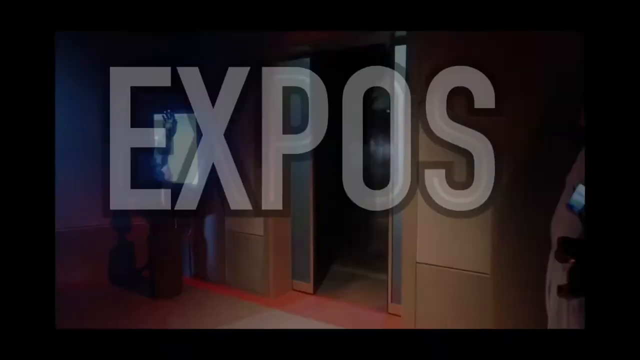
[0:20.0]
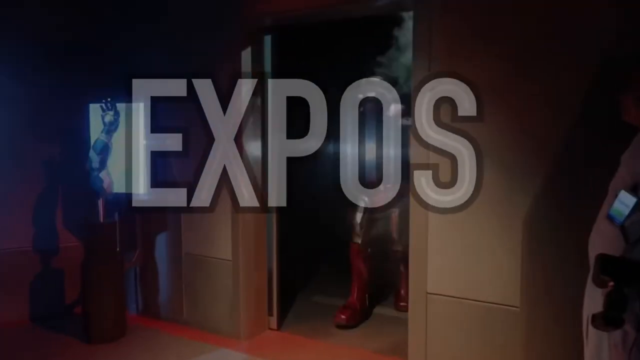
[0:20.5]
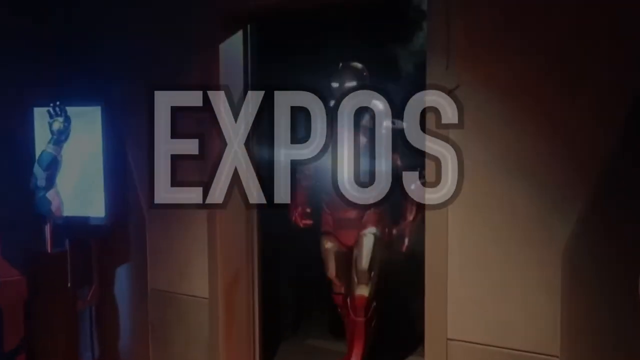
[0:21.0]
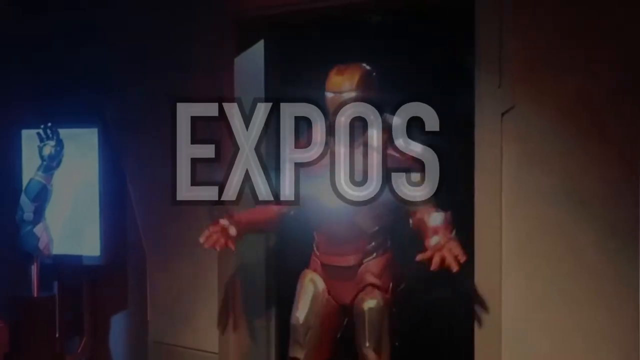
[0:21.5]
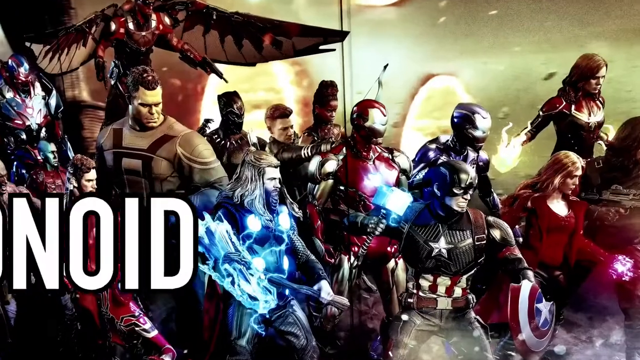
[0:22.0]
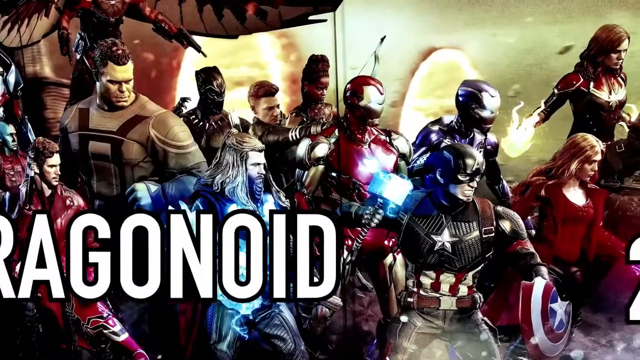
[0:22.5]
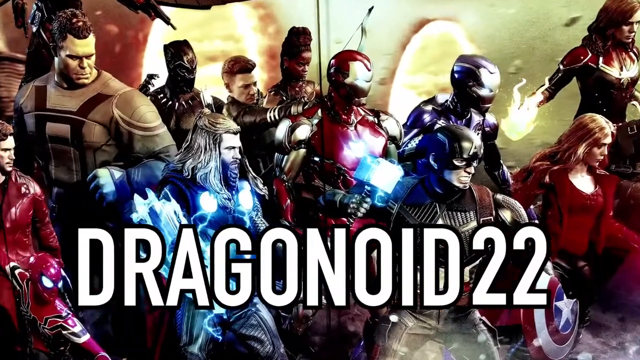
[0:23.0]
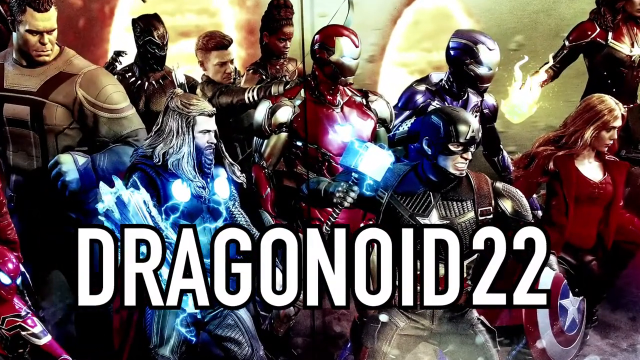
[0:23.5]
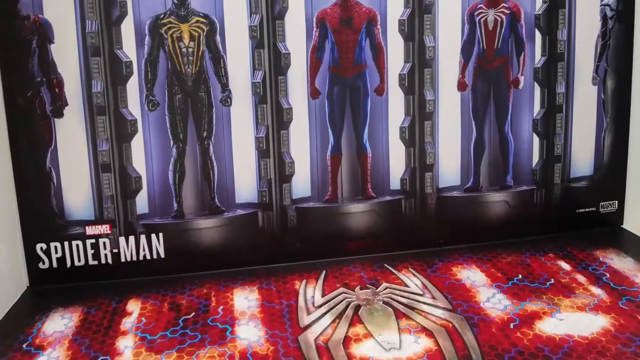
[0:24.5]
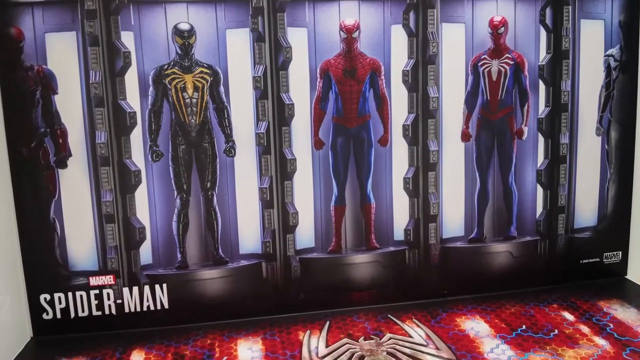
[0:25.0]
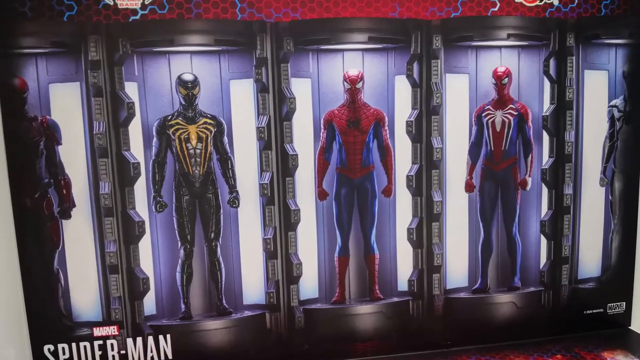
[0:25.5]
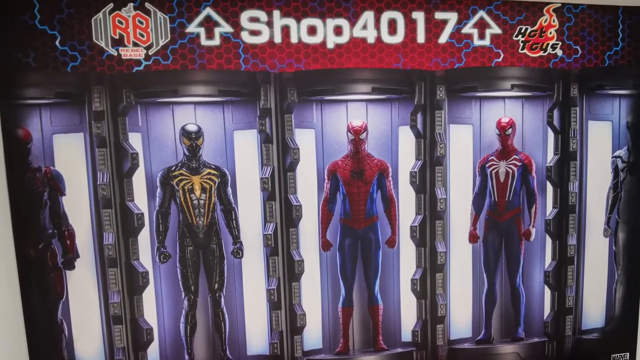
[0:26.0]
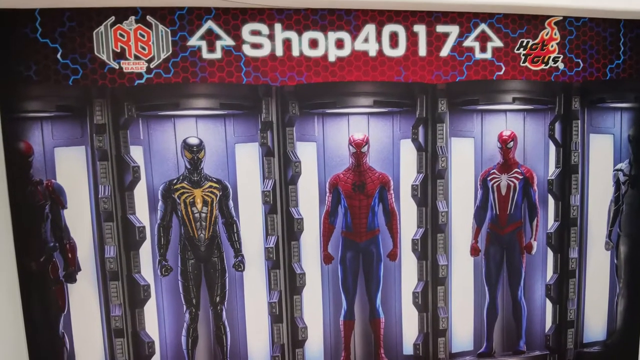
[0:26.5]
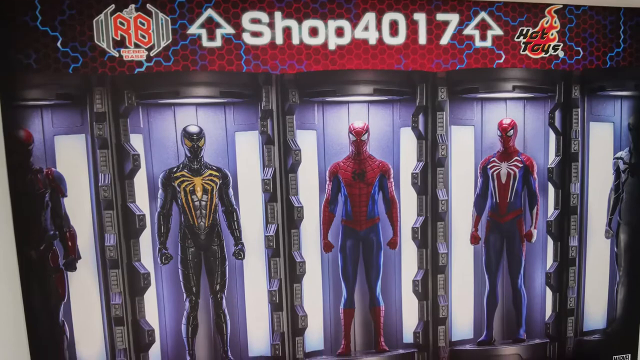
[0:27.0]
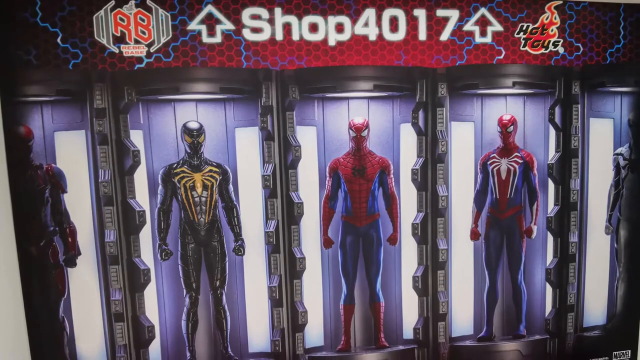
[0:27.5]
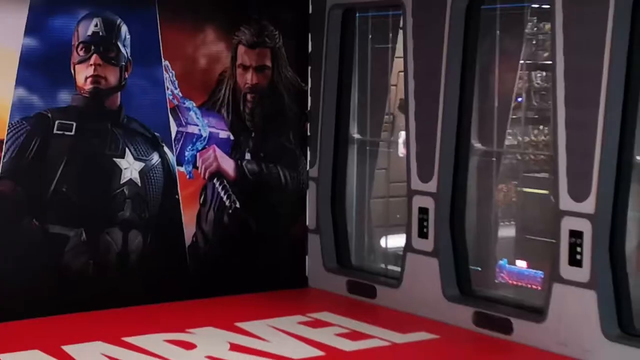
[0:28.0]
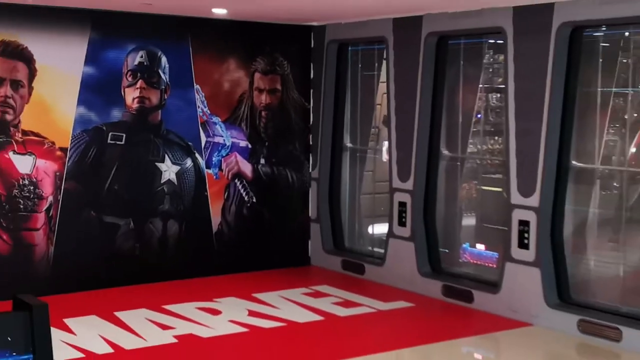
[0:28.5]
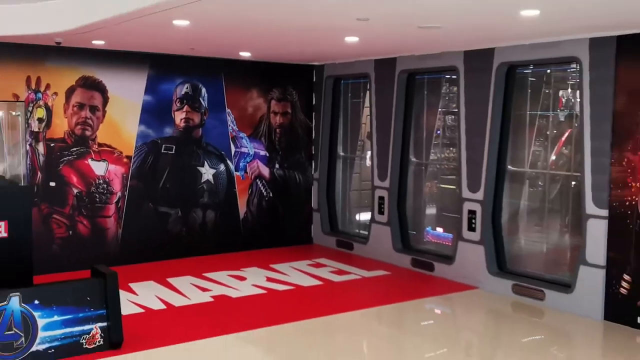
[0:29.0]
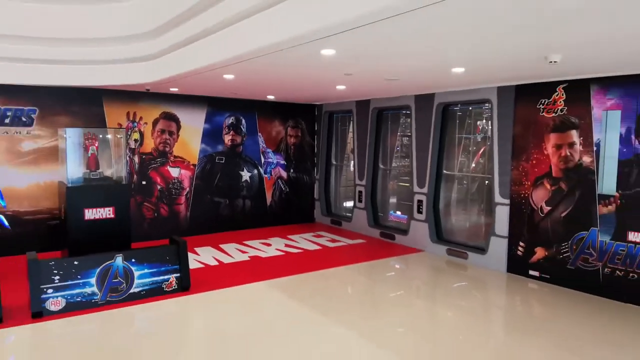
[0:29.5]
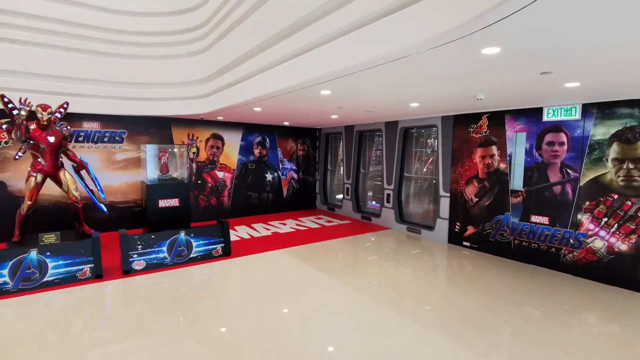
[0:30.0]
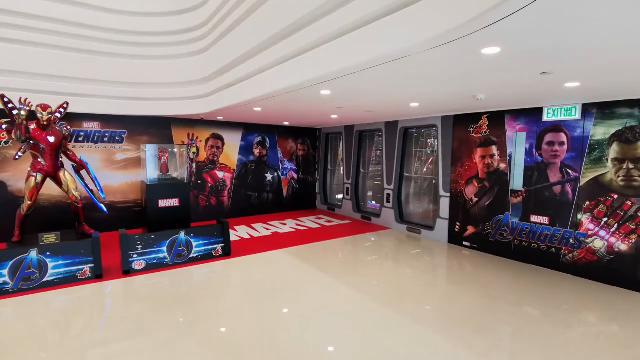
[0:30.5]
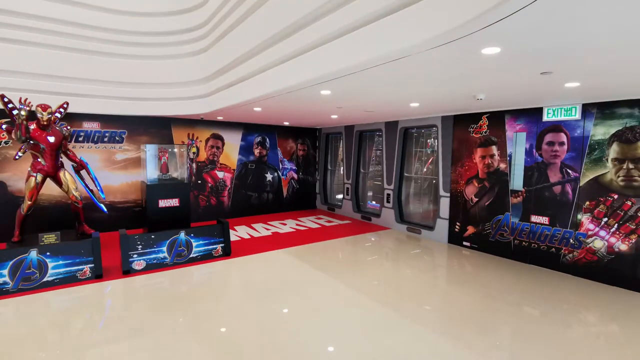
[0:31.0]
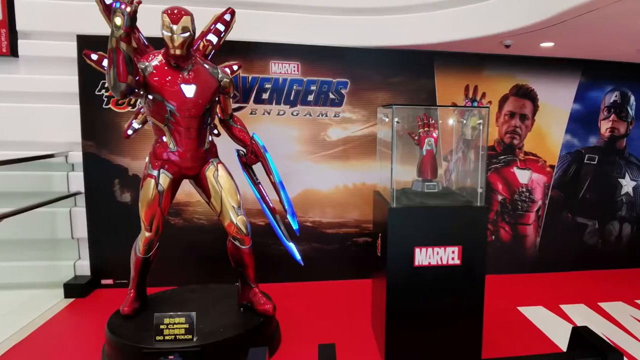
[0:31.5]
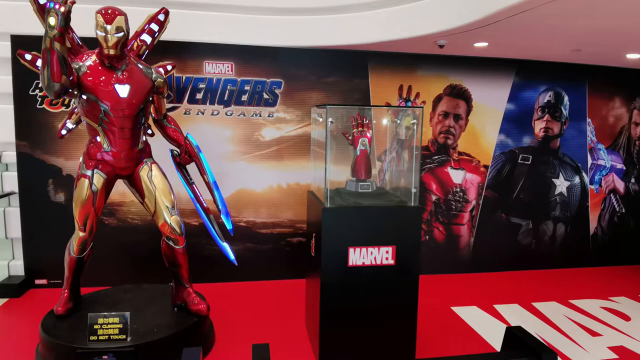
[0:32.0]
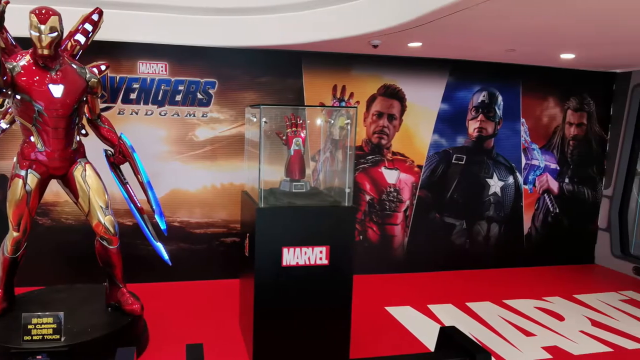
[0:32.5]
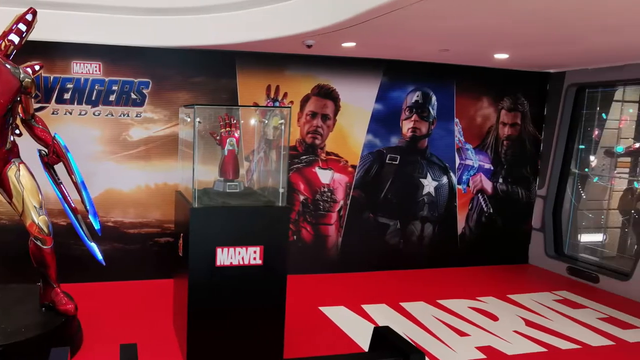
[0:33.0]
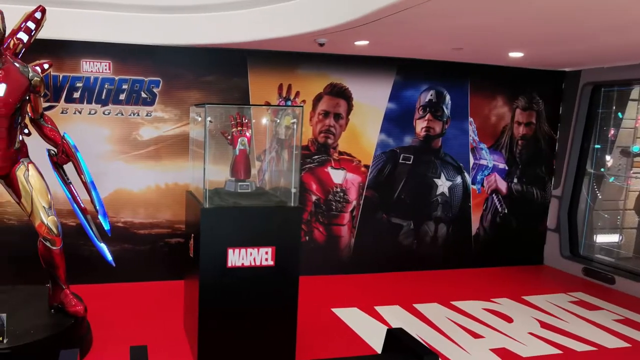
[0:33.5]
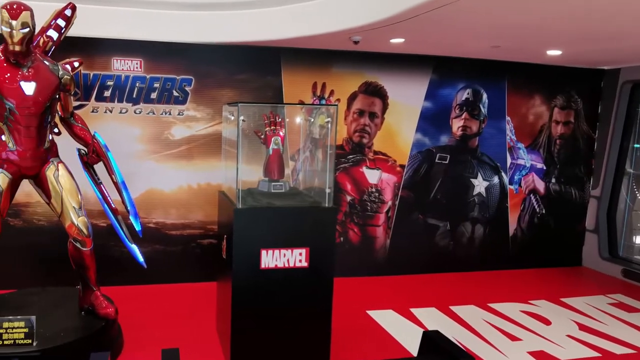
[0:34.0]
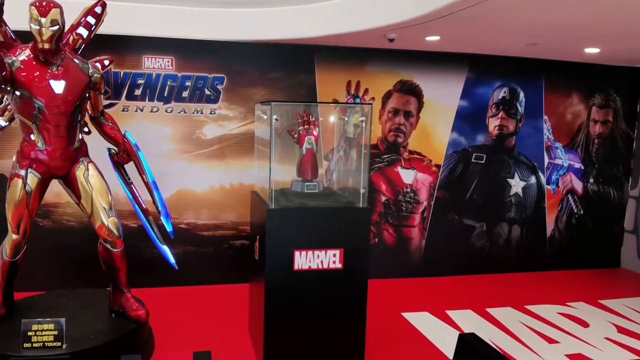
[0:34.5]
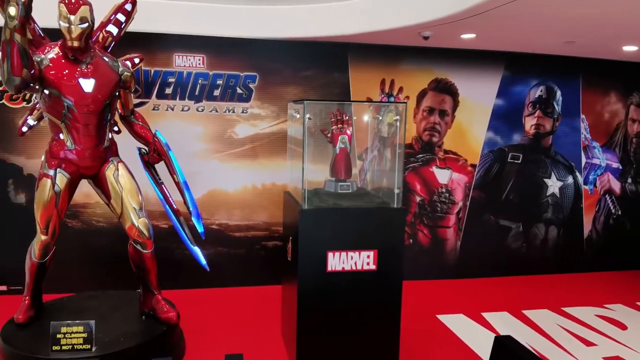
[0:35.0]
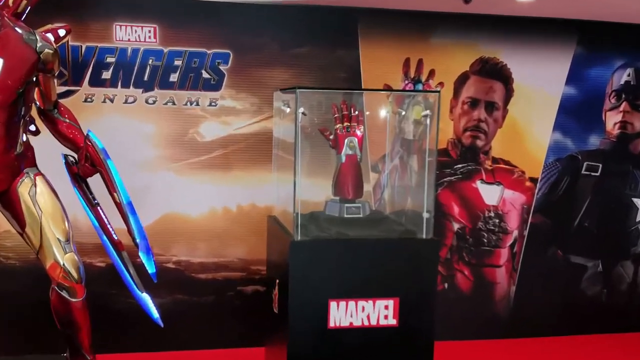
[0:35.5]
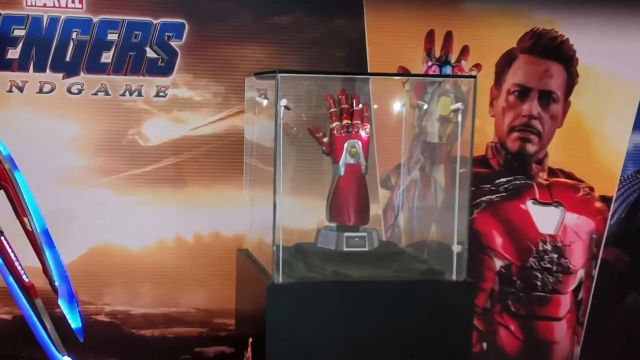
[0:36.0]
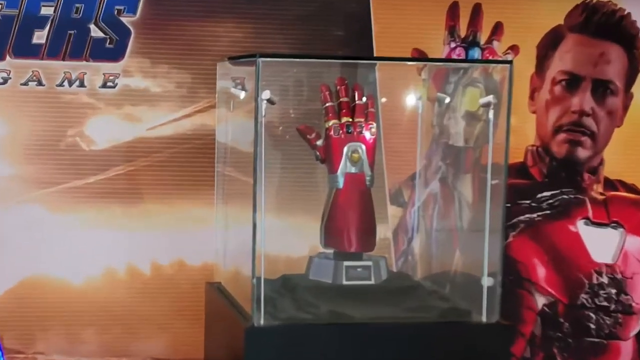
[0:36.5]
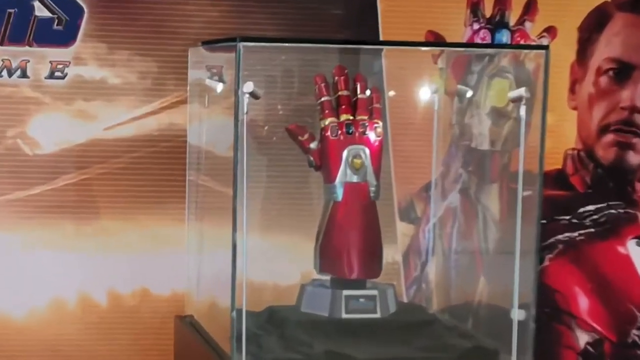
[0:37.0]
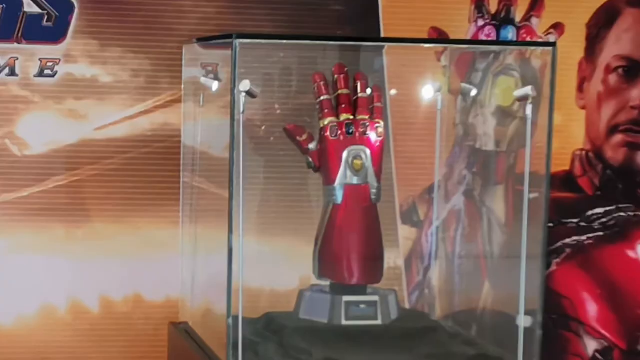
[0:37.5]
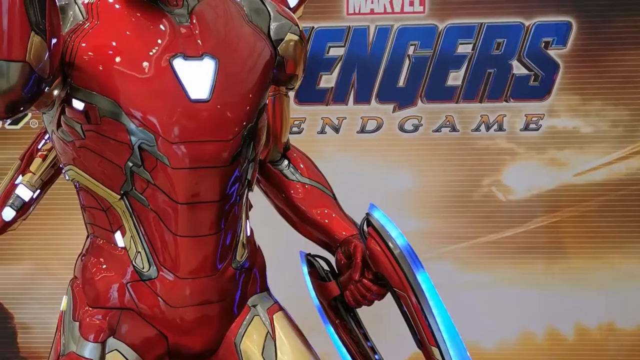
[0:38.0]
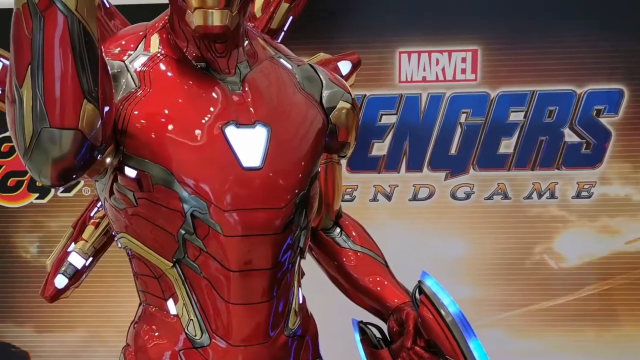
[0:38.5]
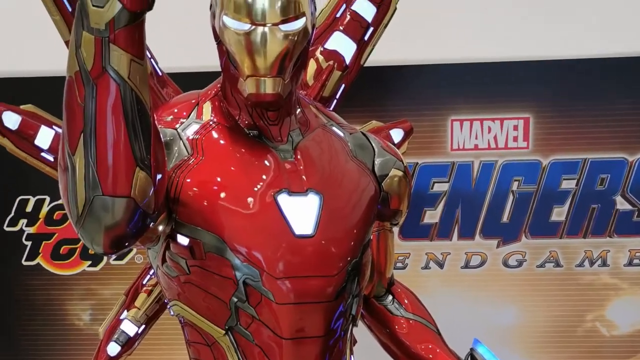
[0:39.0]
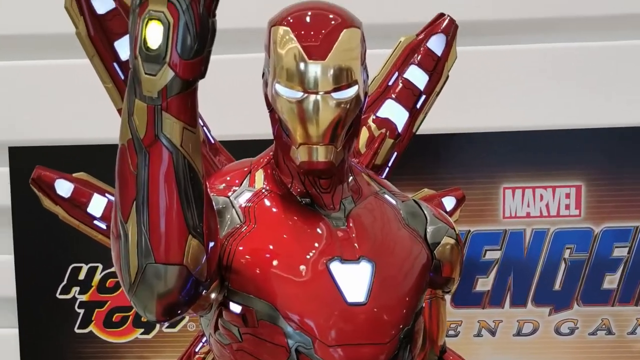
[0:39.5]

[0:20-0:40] Different photos of the Hot Toys Rebel Base store and expo are shown. Dragonoid 22 is also shown. Photos of the expo itself include an Avengers background with all the Avengers at the back. An Iron Man statue from Avengers Endgame is displayed, and alongside it is what appears to be the Iron Man Infinity Gauntlet inside a glass case. The video pans through the photos with the Avengers Endgame background.